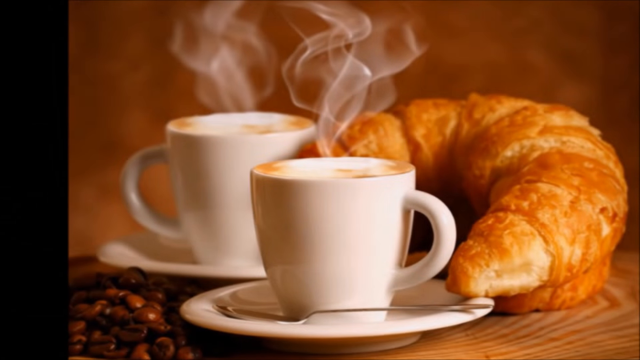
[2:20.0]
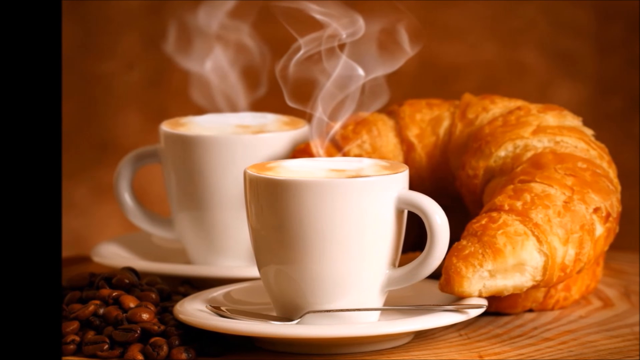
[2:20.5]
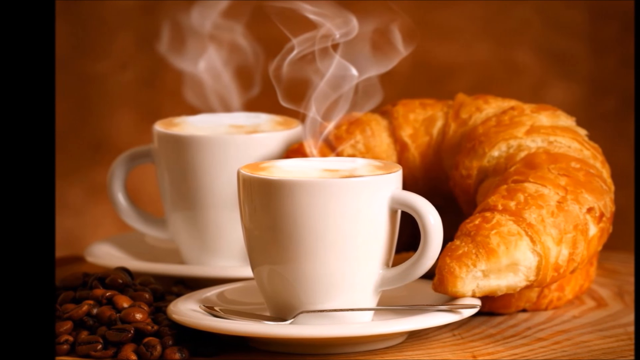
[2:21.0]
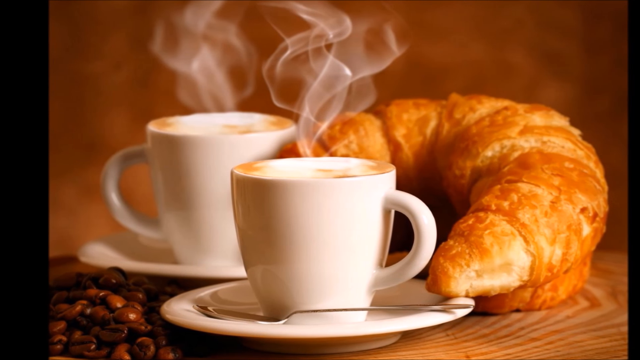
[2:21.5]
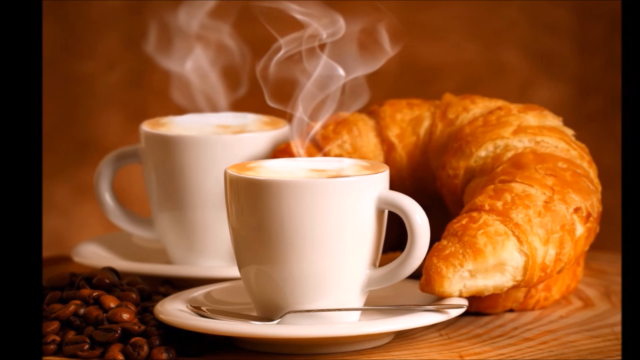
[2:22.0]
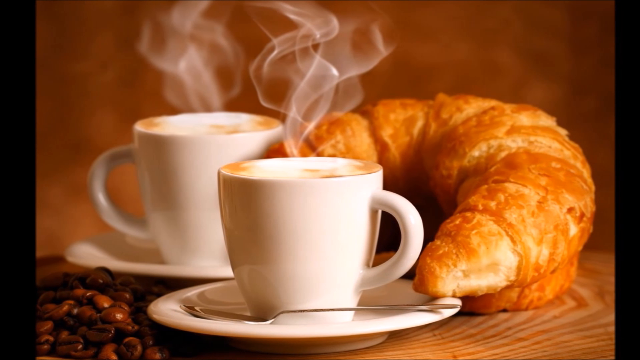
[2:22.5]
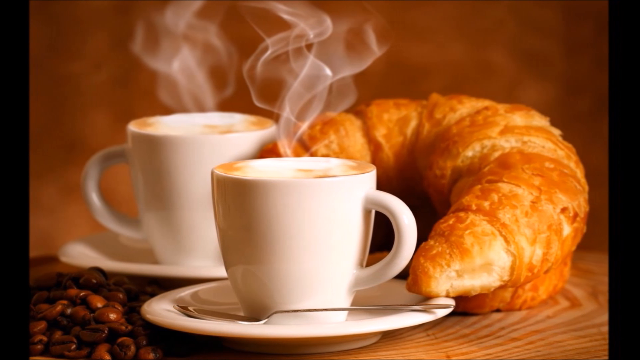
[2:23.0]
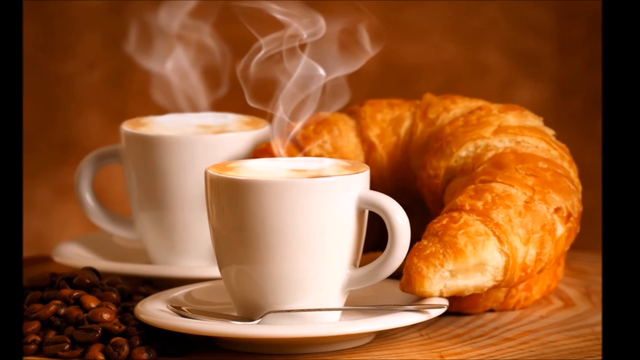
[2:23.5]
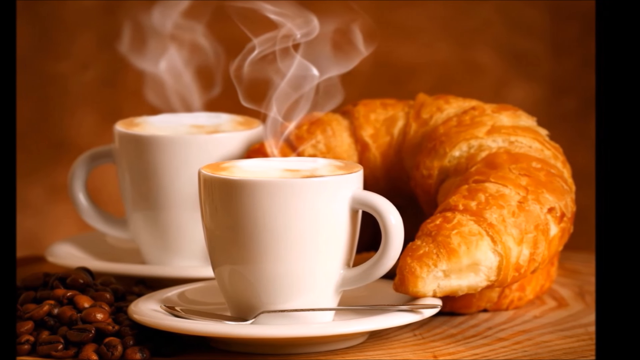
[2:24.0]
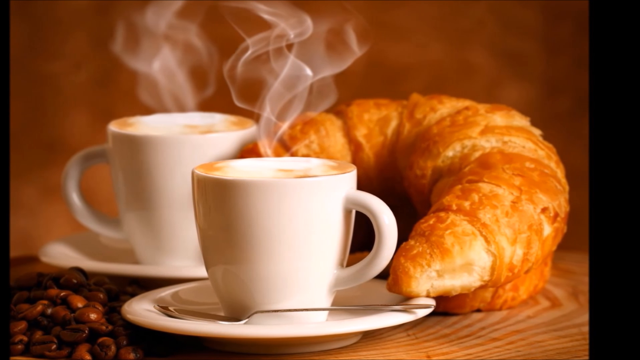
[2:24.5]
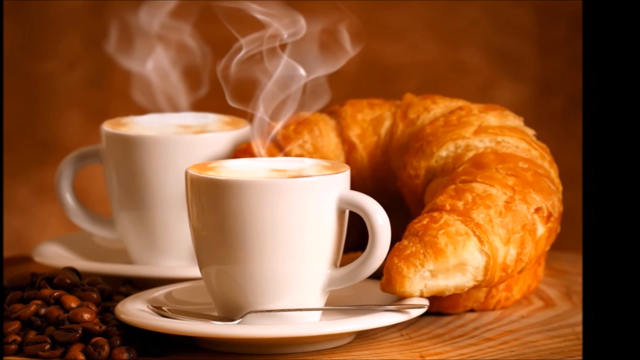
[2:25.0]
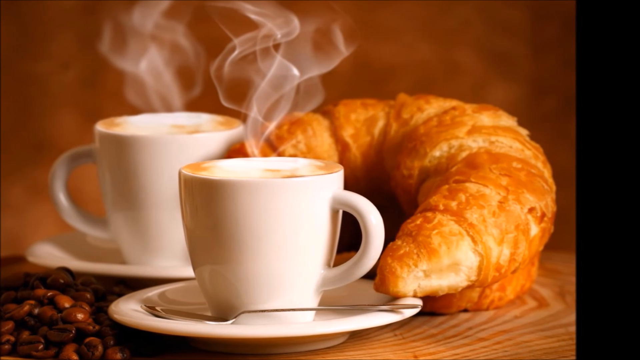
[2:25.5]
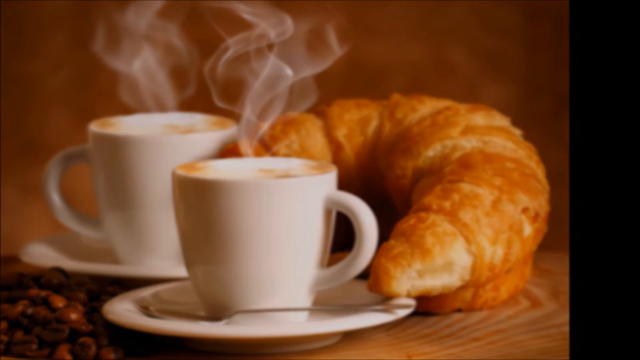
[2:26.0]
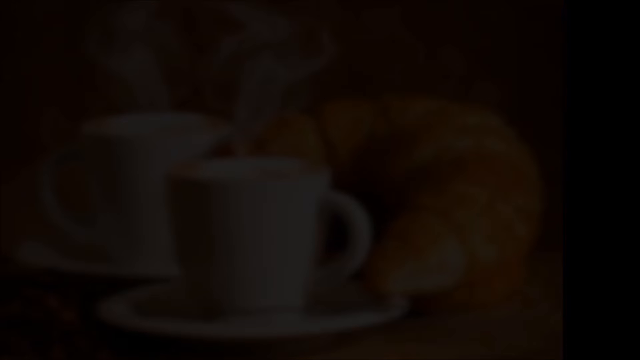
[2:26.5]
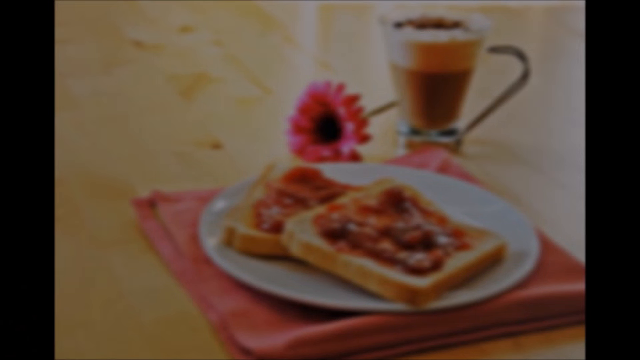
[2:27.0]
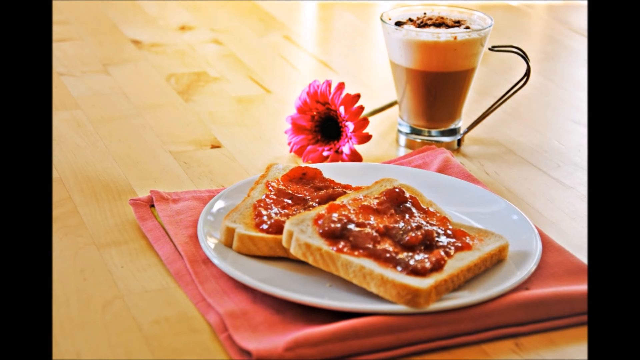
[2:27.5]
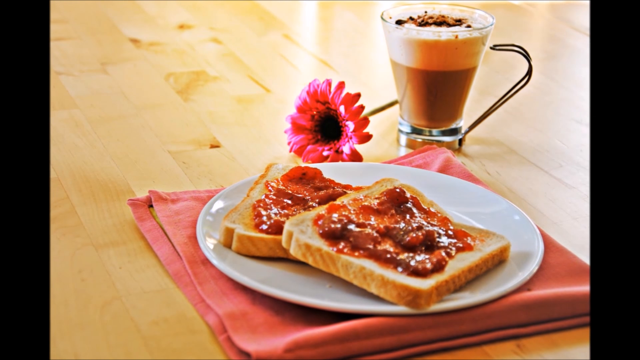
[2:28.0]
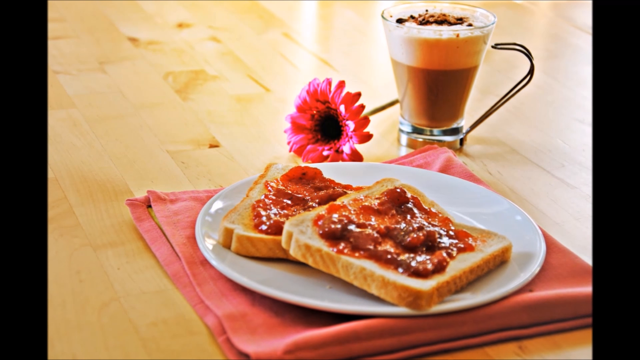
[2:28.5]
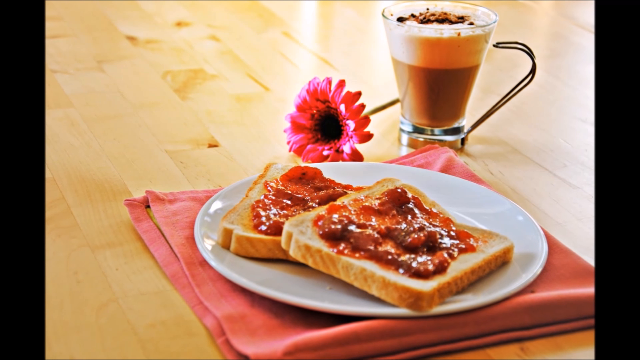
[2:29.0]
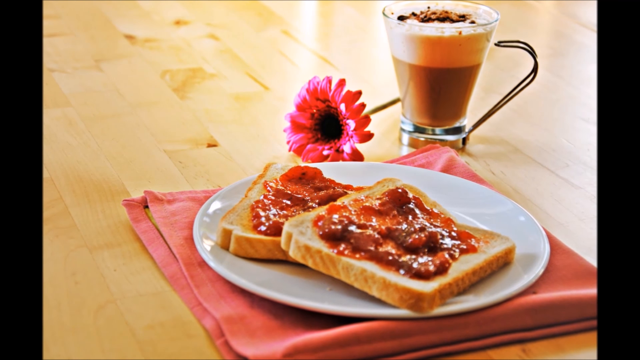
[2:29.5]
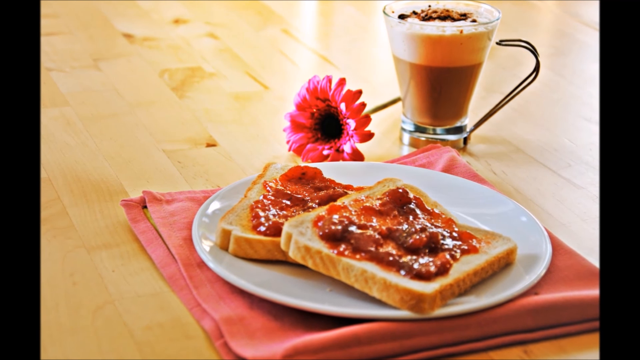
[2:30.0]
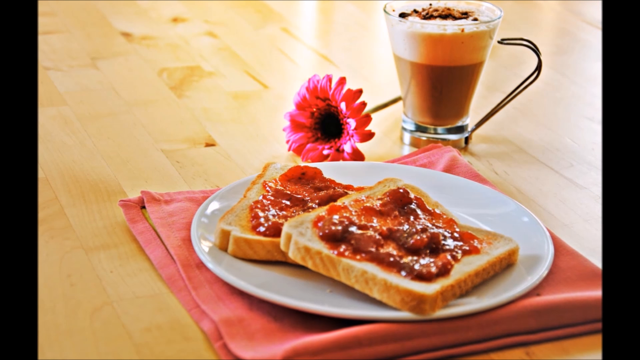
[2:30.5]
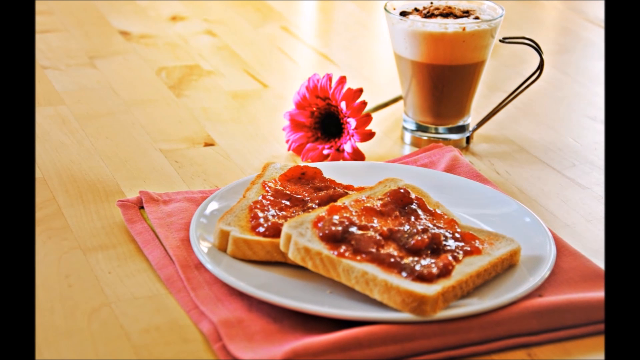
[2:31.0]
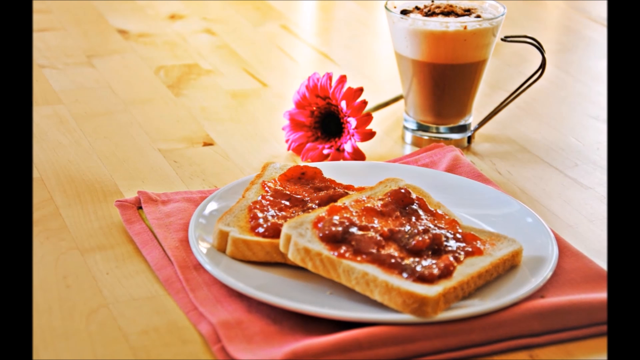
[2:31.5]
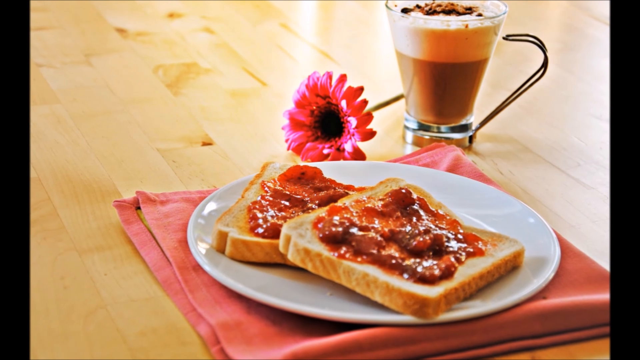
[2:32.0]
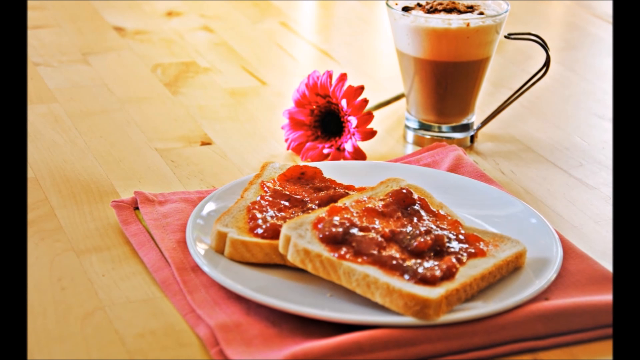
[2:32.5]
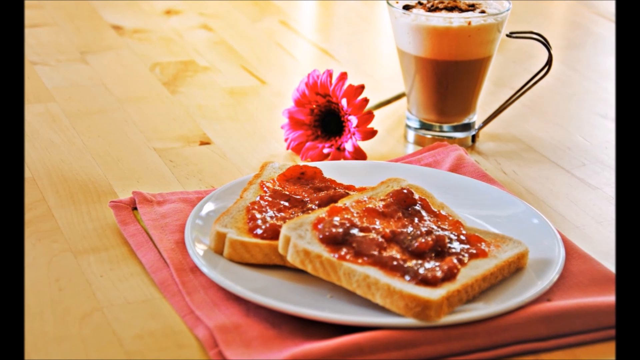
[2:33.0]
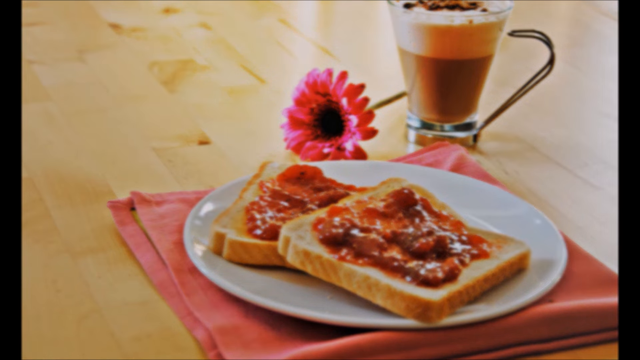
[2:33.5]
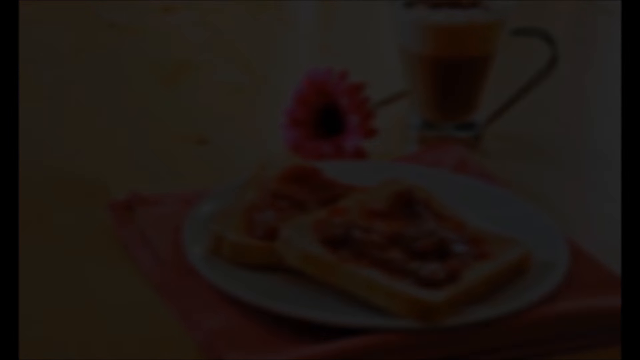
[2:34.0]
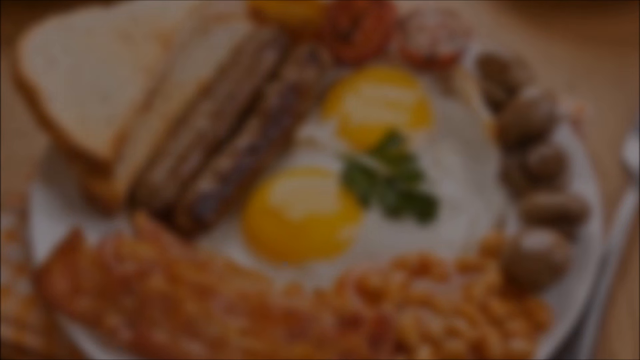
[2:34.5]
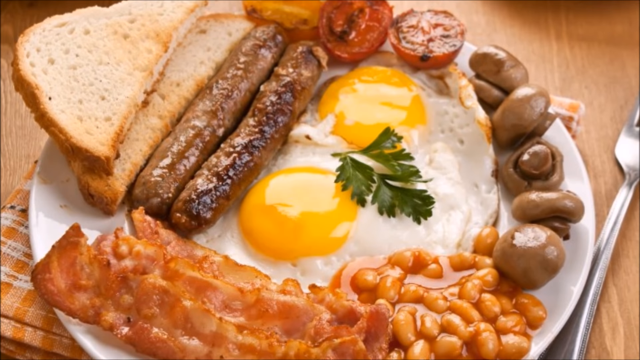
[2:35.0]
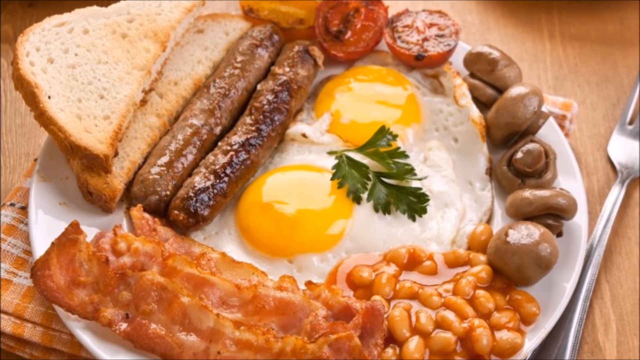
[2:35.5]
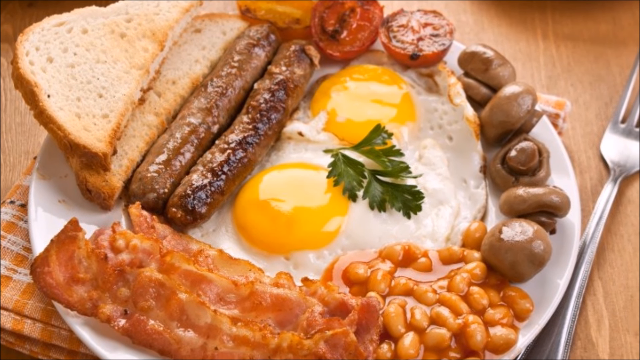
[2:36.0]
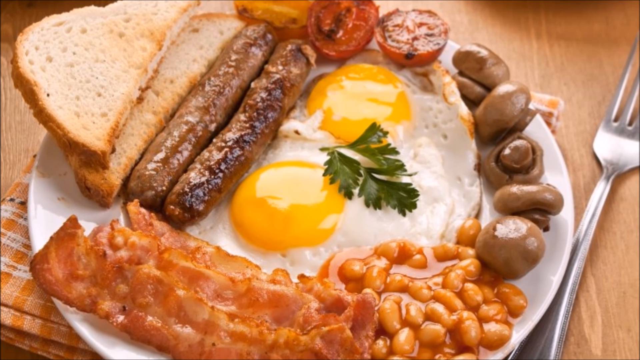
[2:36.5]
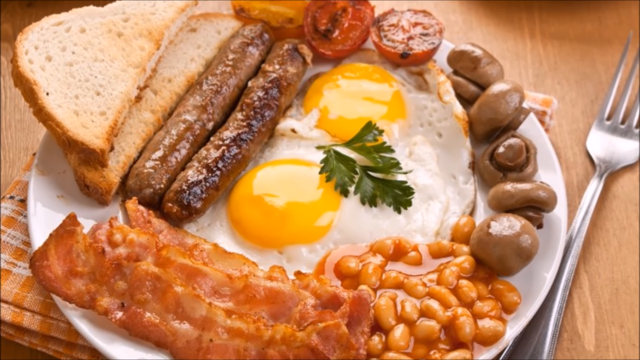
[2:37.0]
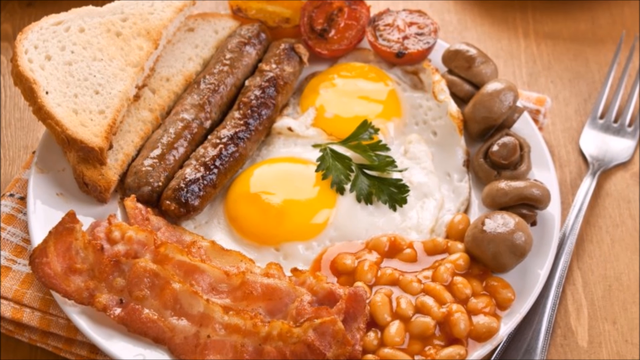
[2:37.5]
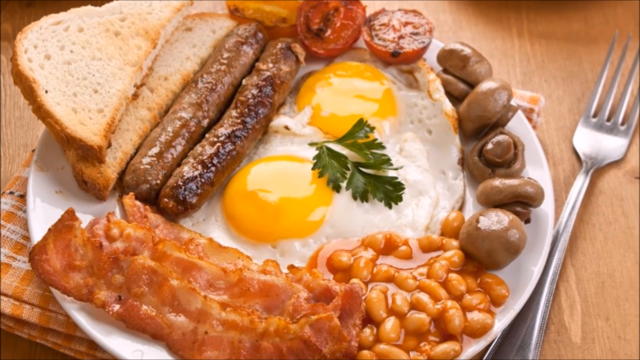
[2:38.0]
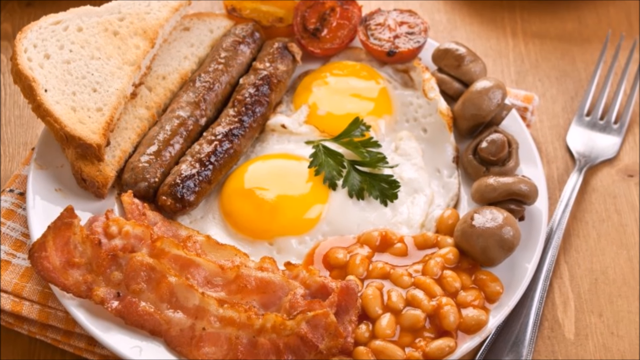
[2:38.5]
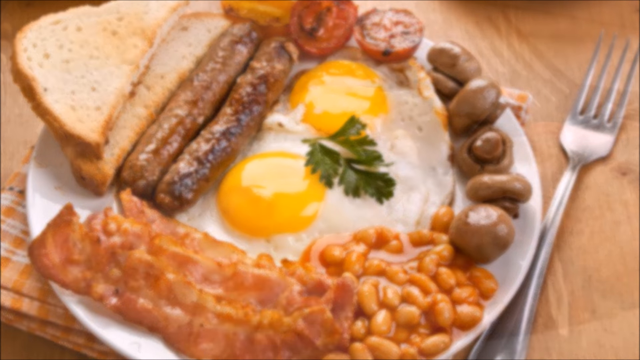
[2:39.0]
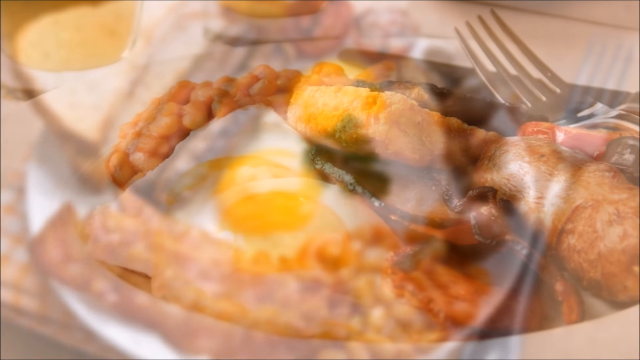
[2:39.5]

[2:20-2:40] The scene blacks out, and an image appears of two white mugs of piping hot, steaming coffee; the handle of the front mug is turned to the right and the one in the background is turned to the left. A spoon is on the saucer in front of the coffee, a large croissant is to the right of both mugs, and a pile of coffee beans is on the left. The view pans to the right. An image fades in of a light wooden table with a pink cloth napkin holding a white plate with two slices of toast with jam. Behind that is a pink flower next to a glass of coffee with cream at the top, and the view zooms there. Next is a large white plate on a wooden table filled with toast, sausages, roasted tomatoes, two fried eggs in the middle, five mushrooms on the side, two slices of bacon at the bottom and some beans at the bottom right, with a fork to the right. The view zooms out.